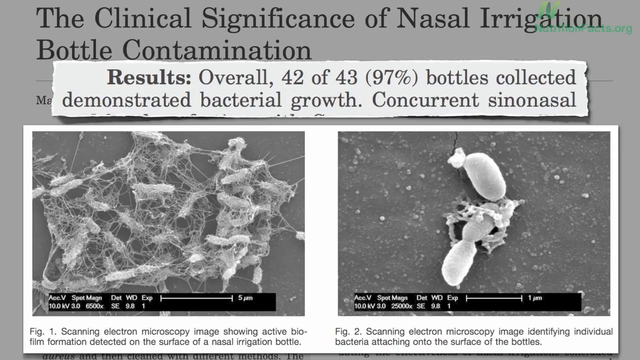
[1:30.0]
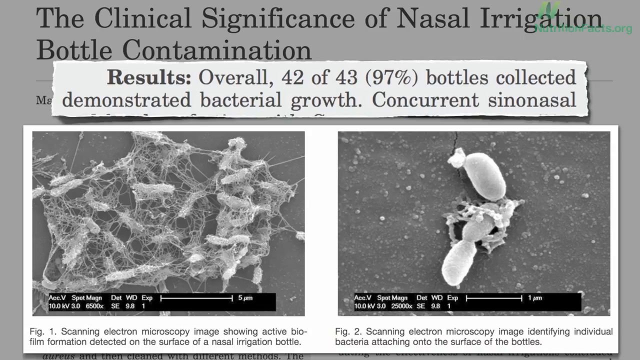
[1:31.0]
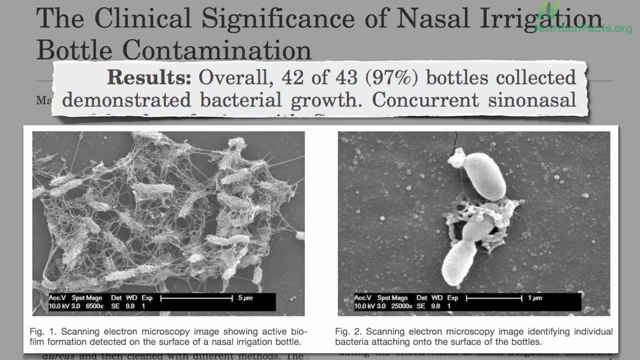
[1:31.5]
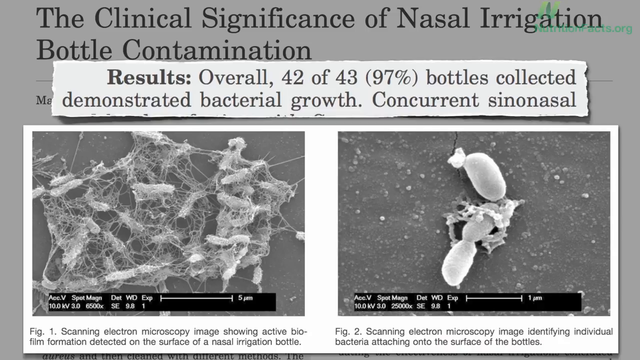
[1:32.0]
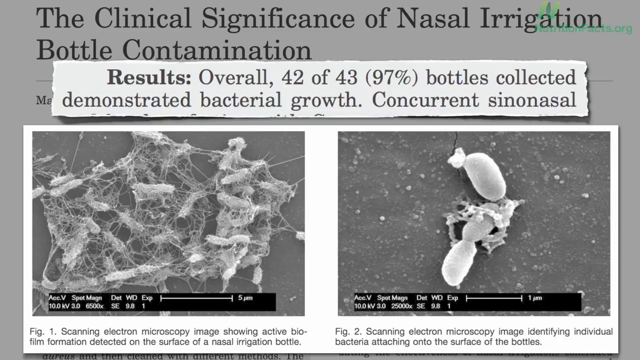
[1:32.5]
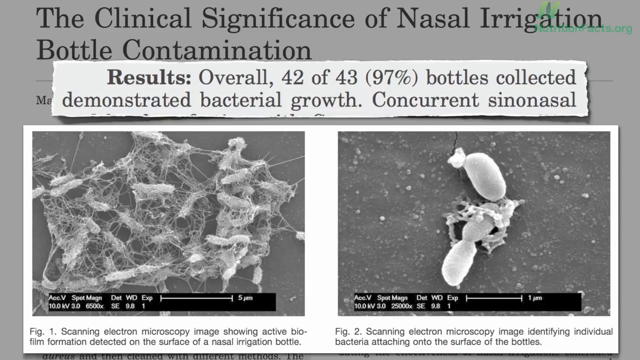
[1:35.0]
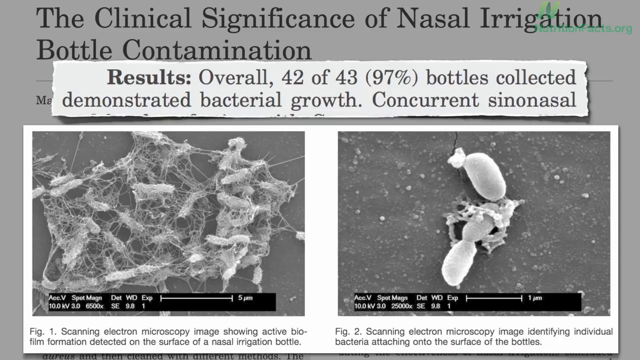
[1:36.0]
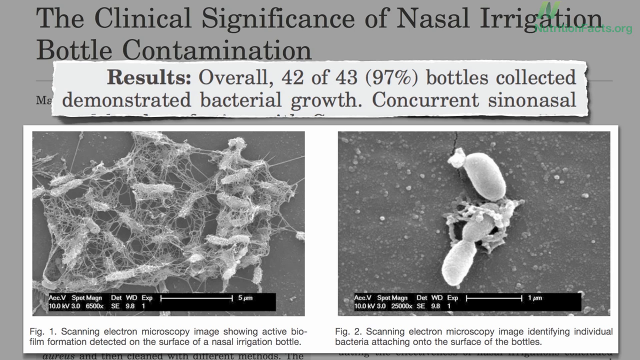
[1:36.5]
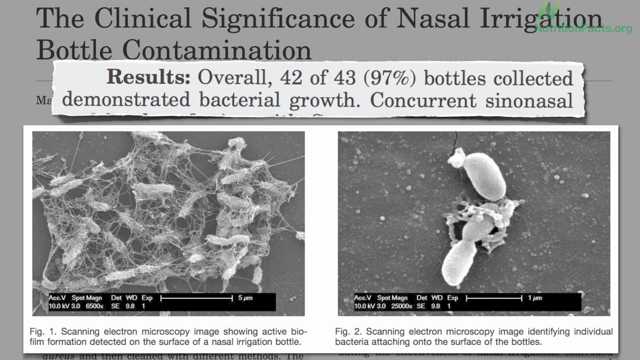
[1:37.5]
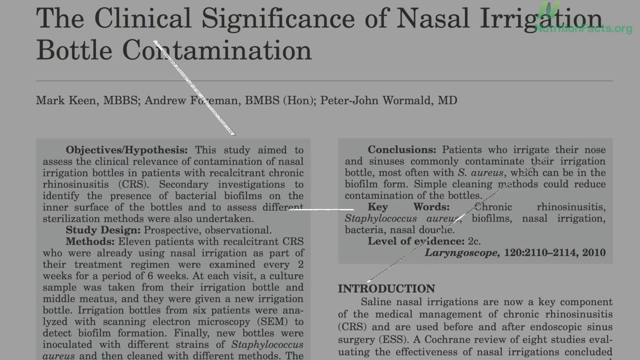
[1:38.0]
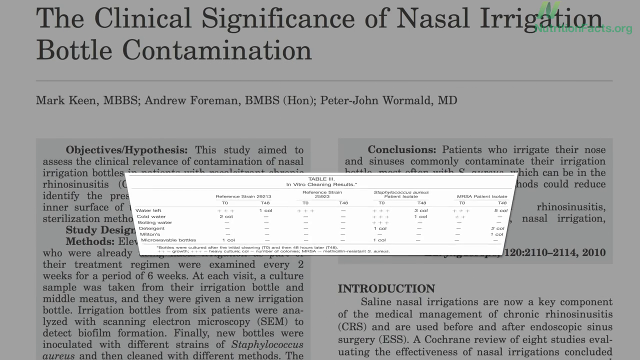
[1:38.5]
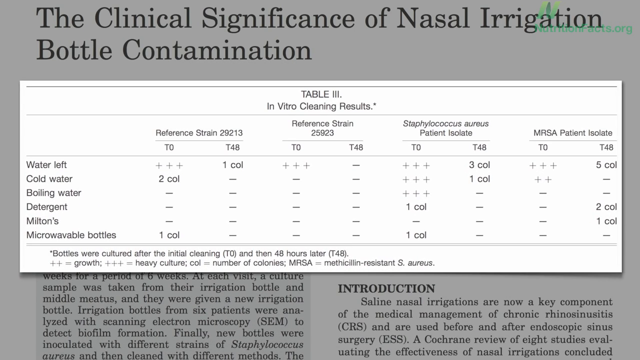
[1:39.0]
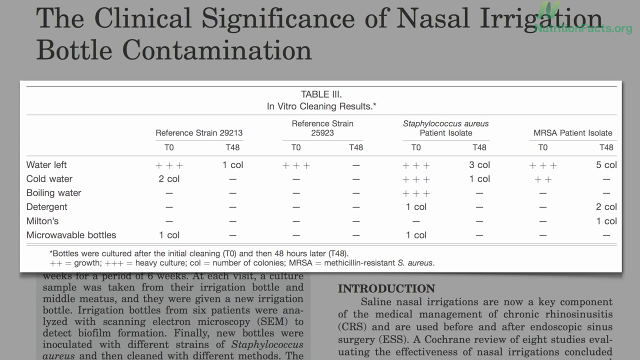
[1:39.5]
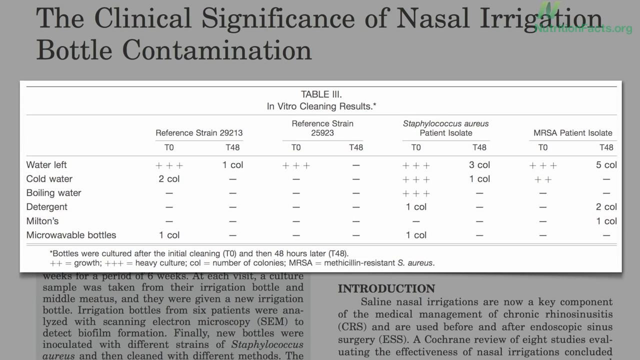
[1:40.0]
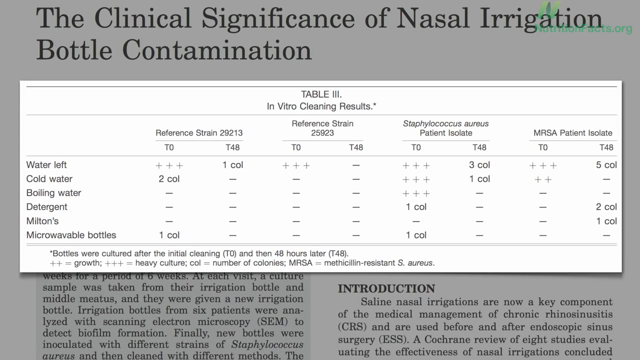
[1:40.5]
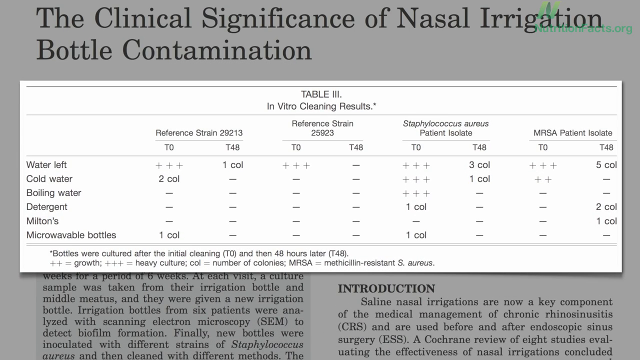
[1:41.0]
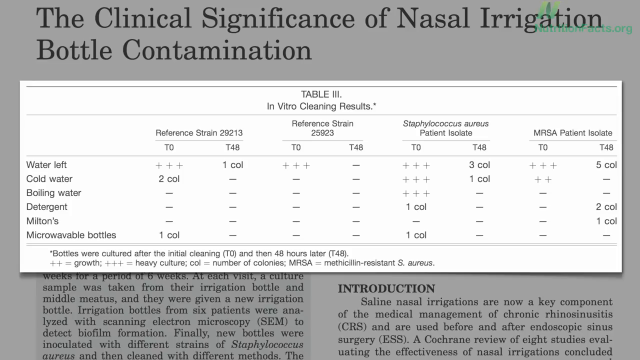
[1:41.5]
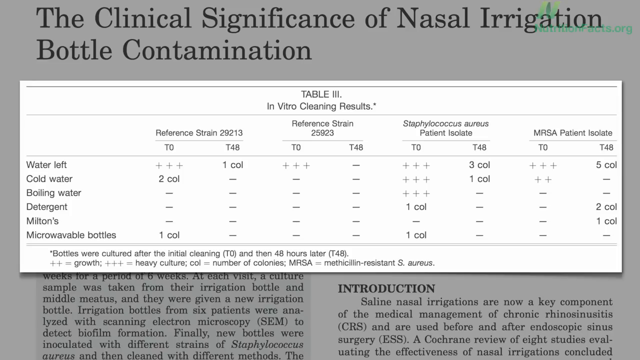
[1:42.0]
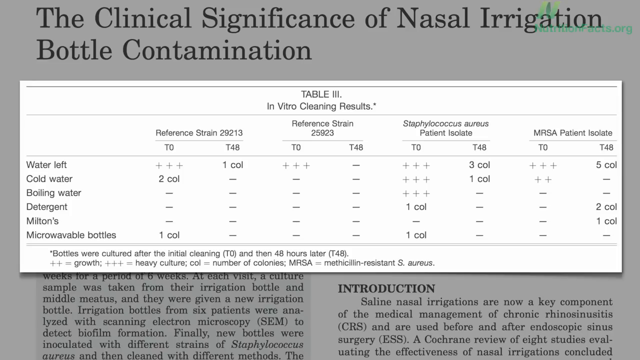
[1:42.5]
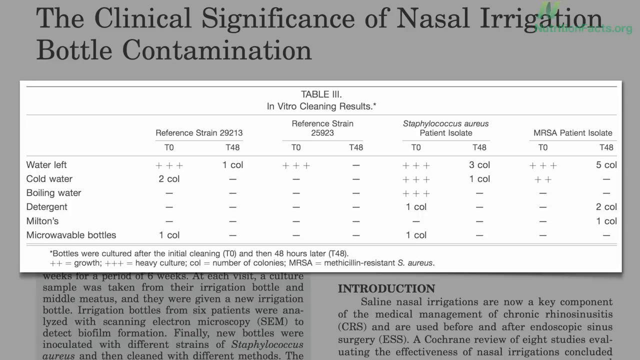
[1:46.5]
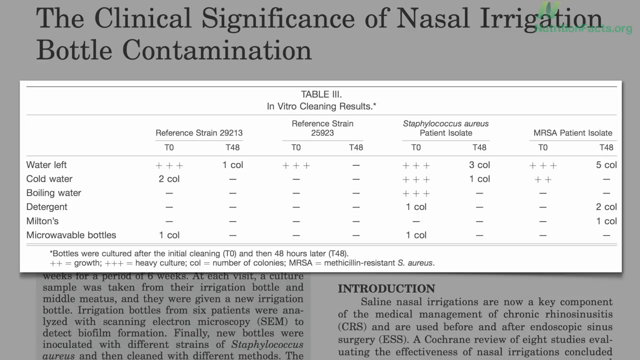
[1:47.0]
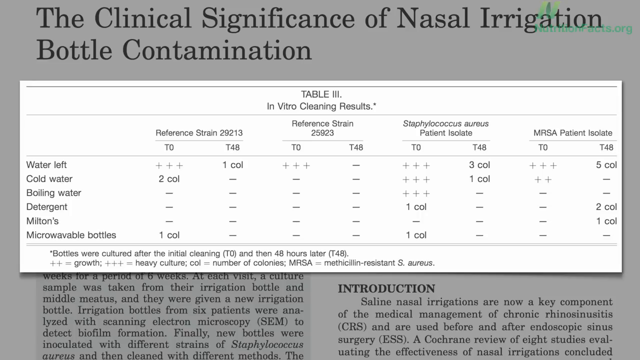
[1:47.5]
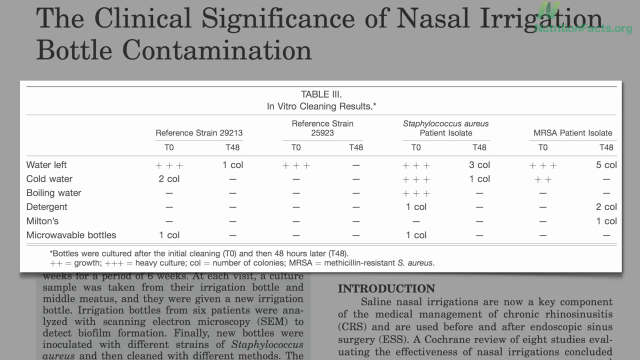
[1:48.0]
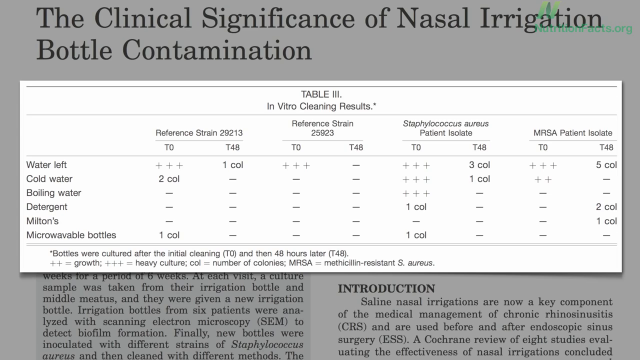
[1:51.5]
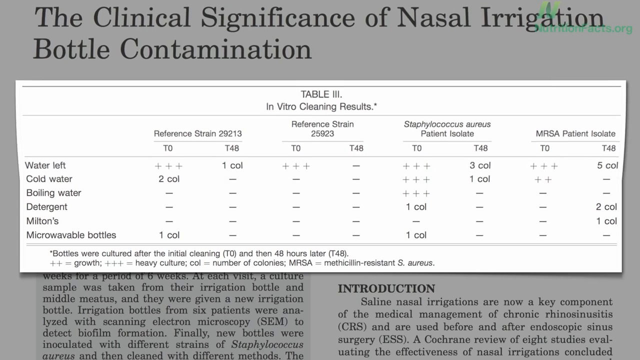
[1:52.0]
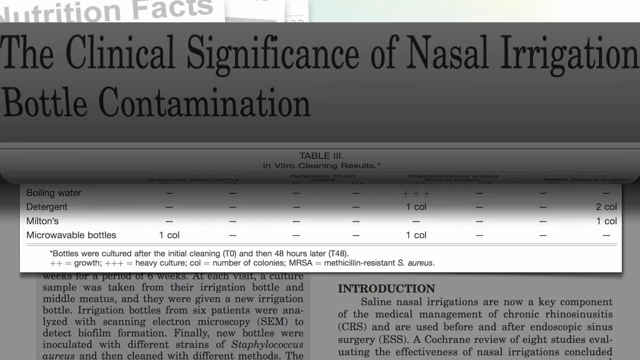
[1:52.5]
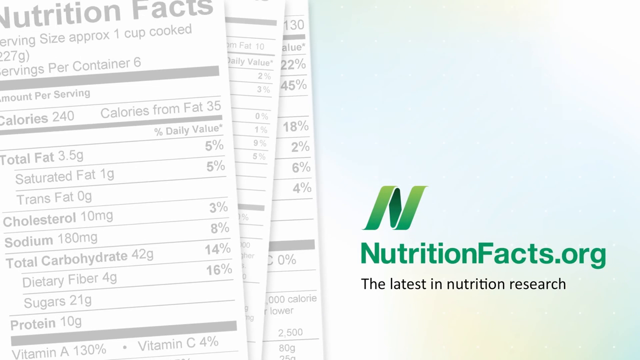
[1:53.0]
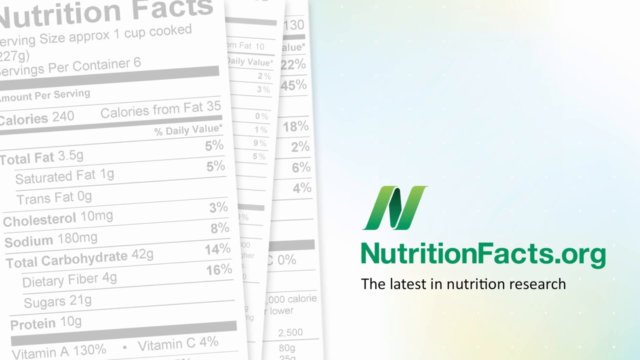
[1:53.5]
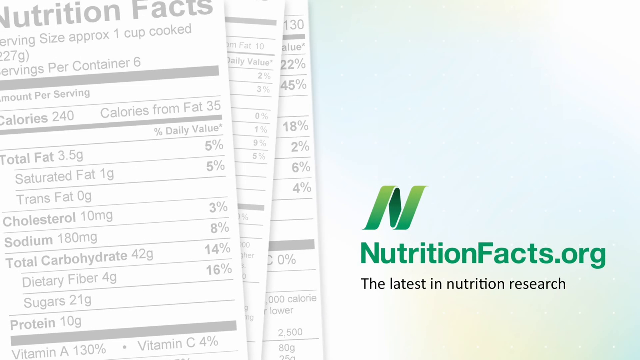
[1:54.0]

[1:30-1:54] A scientific paper titled "The Clinical Significance of Nasal Irrigation Bottle Contamination" is in the background, grayed out, with a clipping over top of it. The clipping has jagged edges on the left and right, appearing to have been torn or cut, and a shadow on the left and right edges as though it is lifting up off the paper on either side. It says that overall, 42 of 43 bottles collected demonstrated bacterial growth. Underneath it is a card with two black and white images side by side. The image on the left shows a bacterial film that was found on the bottles, and the image on the right is a single bacteria that was found on the bottles, each with a caption underneath stating this. After several seconds, the clippings slide off the page, the top one to the left and the bottom one to the right. A table from the paper then appears as a card over top of the story, showing the results of different types of sterilization, such as boiling water, detergent and microwavable bottles.